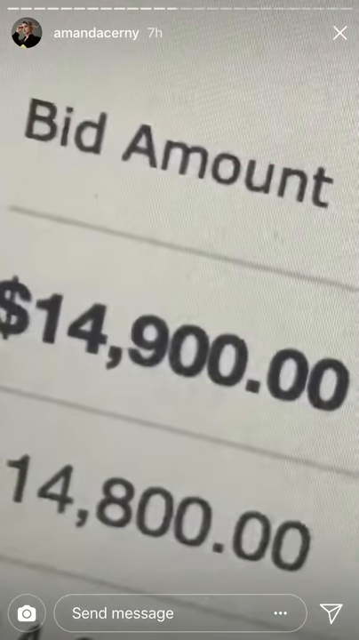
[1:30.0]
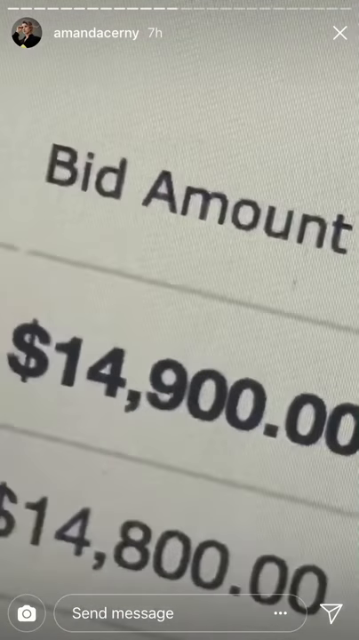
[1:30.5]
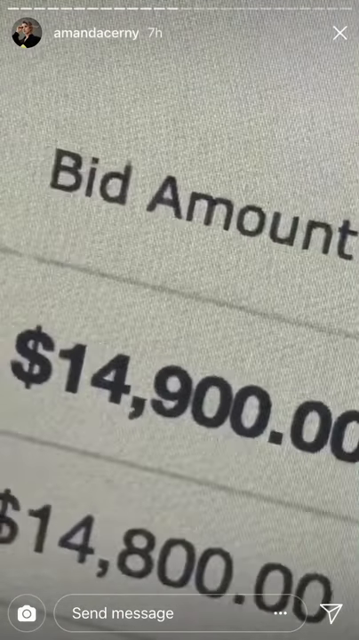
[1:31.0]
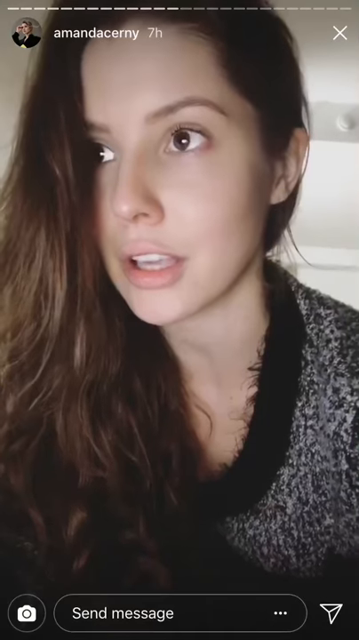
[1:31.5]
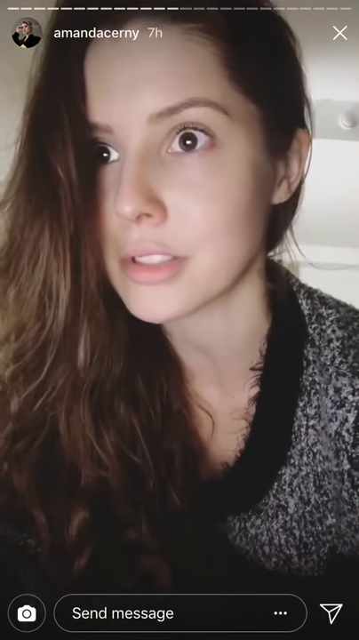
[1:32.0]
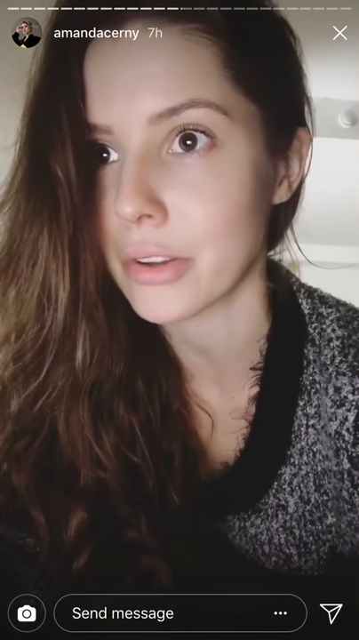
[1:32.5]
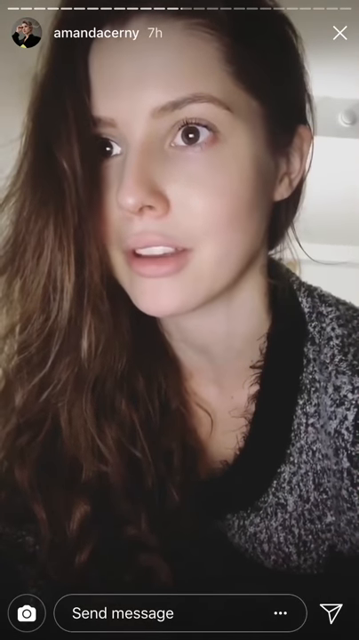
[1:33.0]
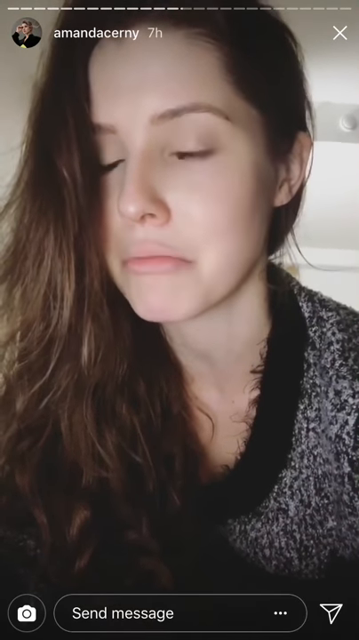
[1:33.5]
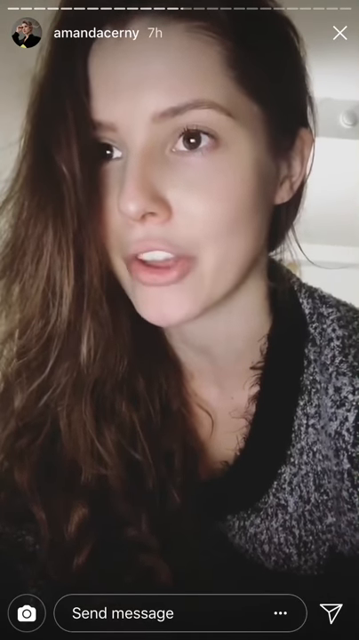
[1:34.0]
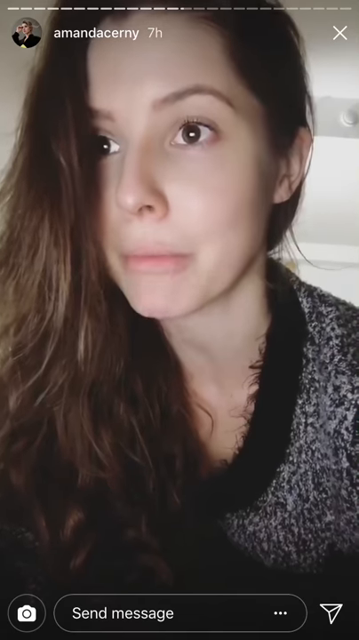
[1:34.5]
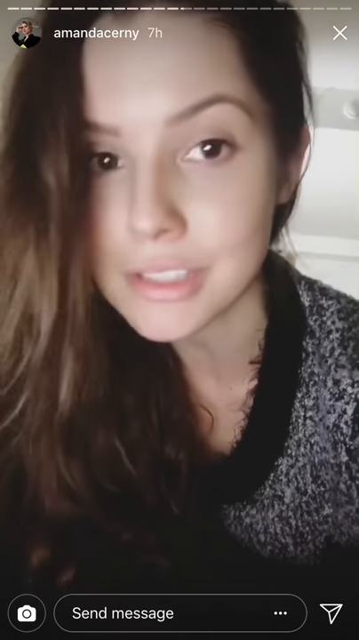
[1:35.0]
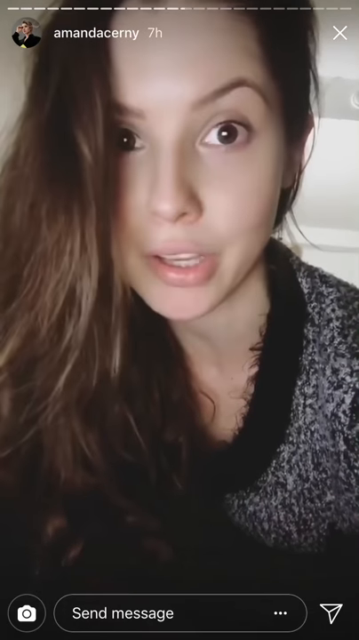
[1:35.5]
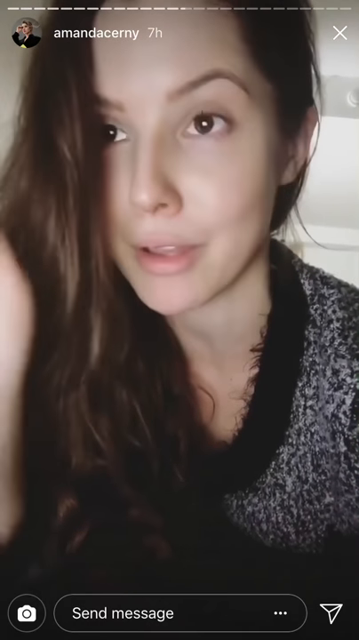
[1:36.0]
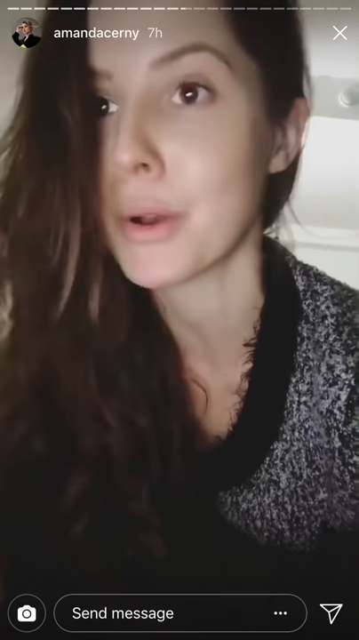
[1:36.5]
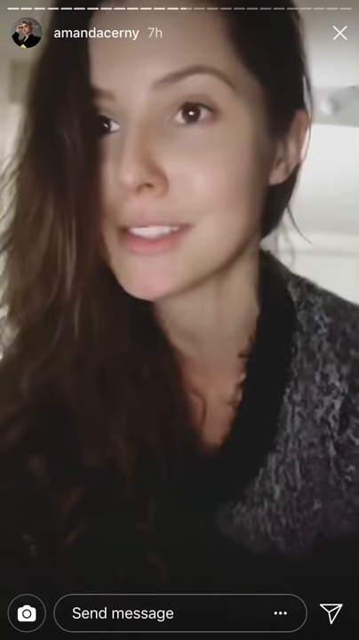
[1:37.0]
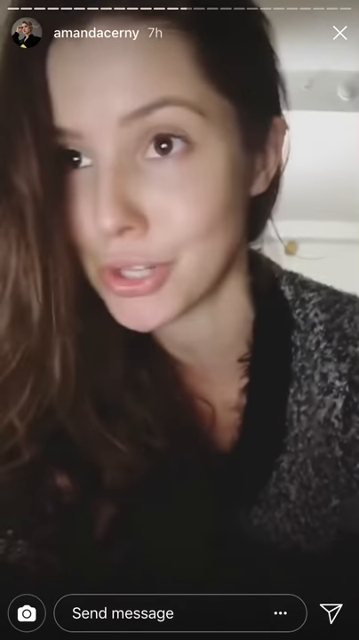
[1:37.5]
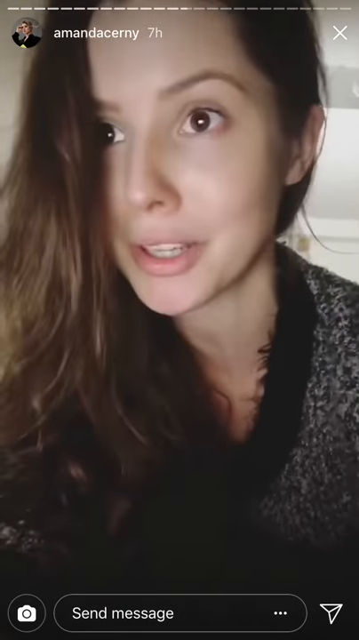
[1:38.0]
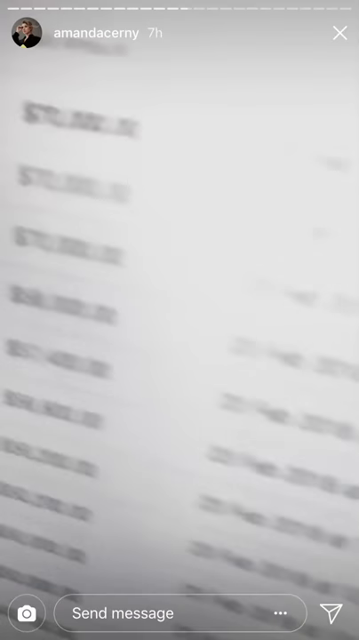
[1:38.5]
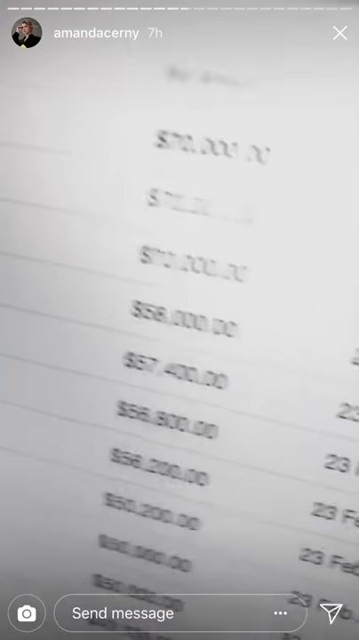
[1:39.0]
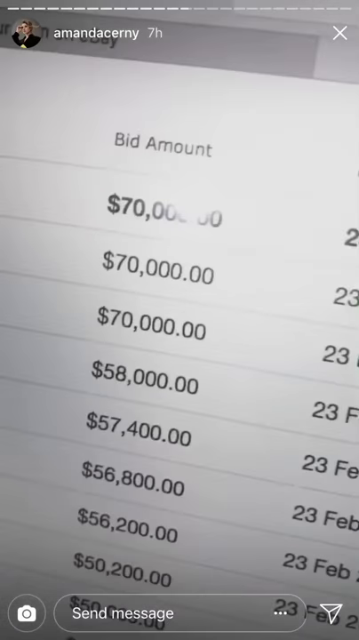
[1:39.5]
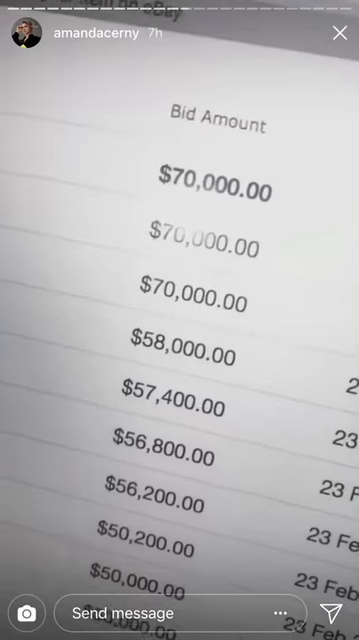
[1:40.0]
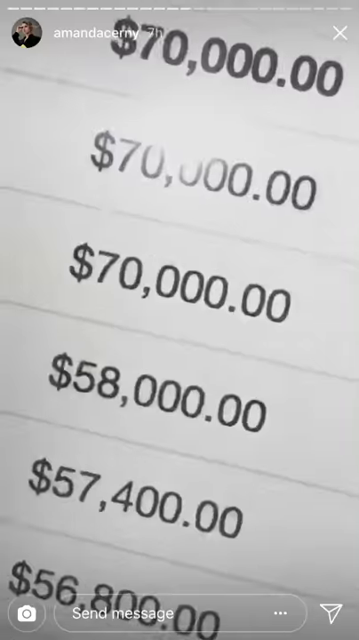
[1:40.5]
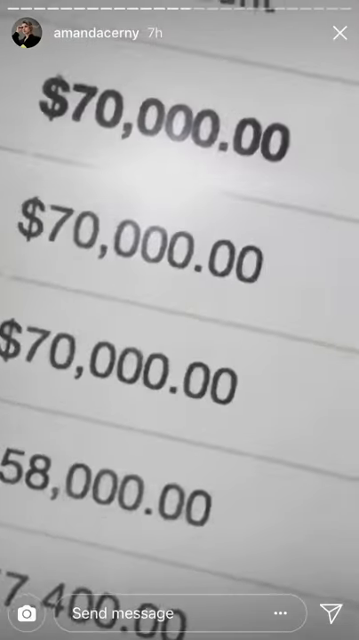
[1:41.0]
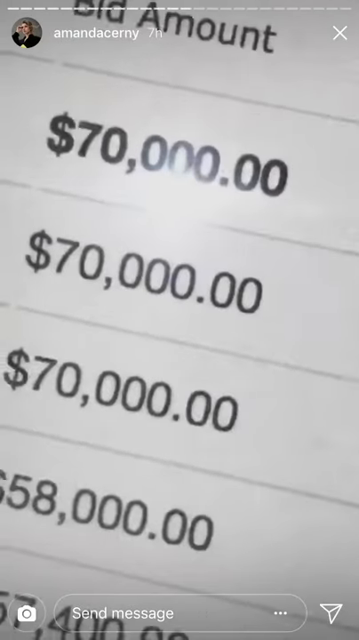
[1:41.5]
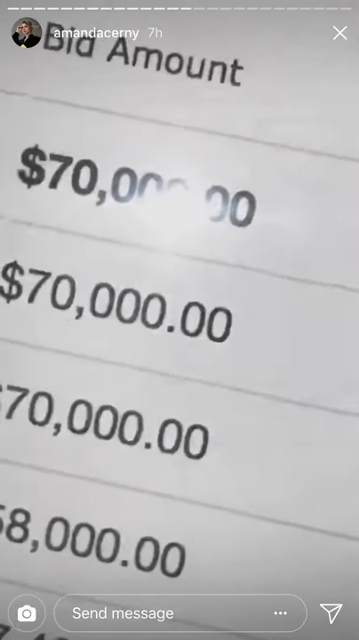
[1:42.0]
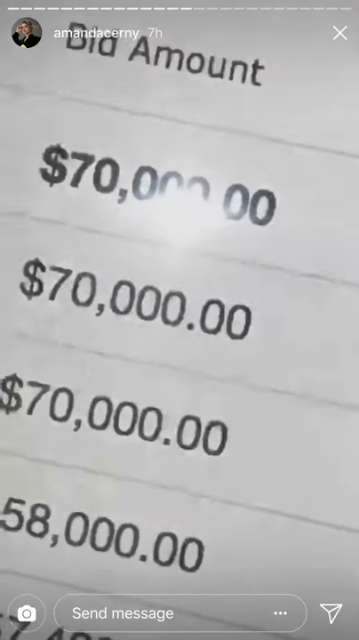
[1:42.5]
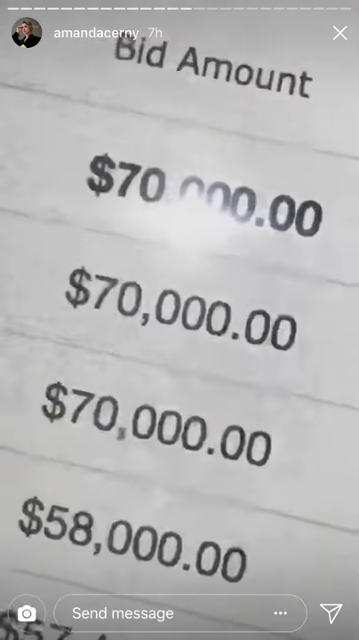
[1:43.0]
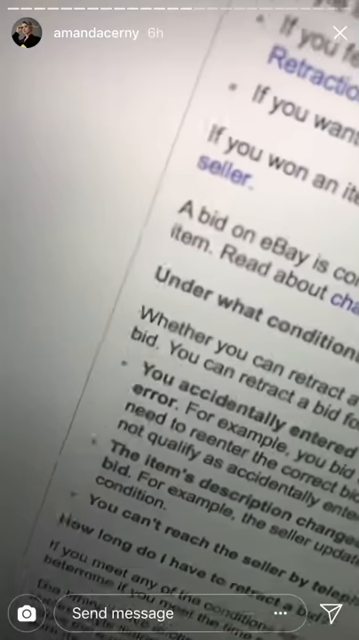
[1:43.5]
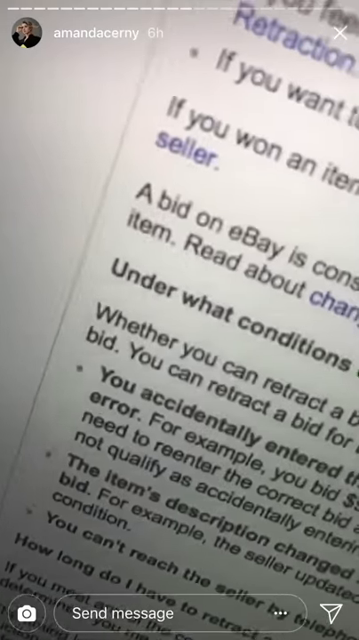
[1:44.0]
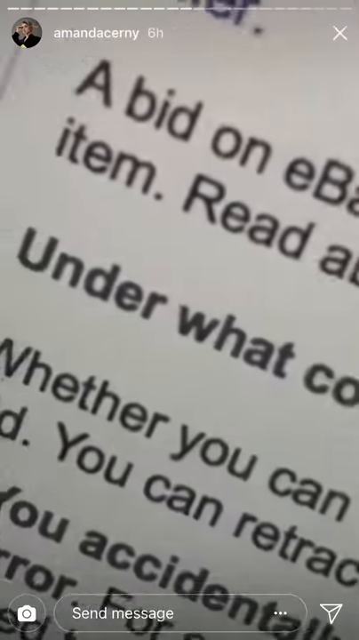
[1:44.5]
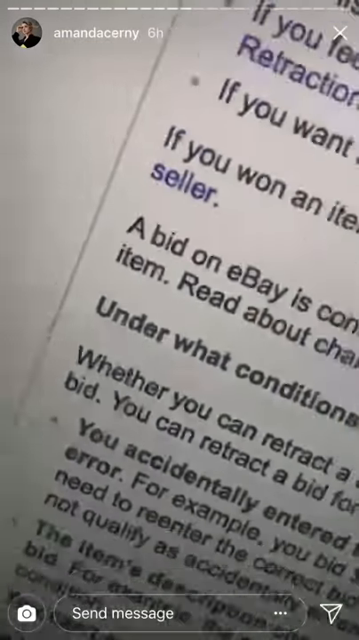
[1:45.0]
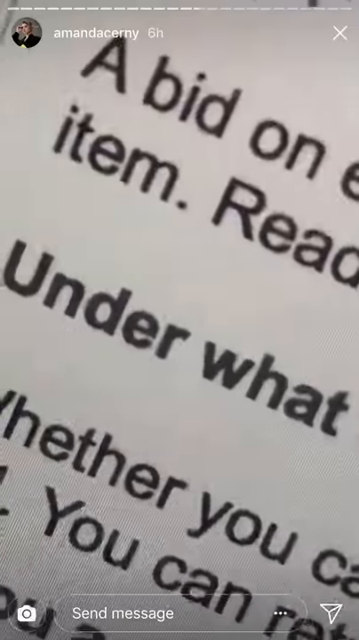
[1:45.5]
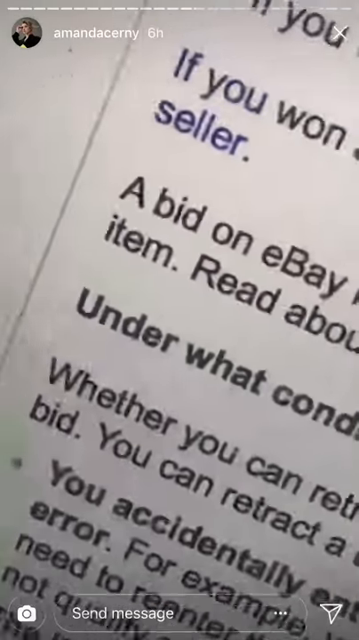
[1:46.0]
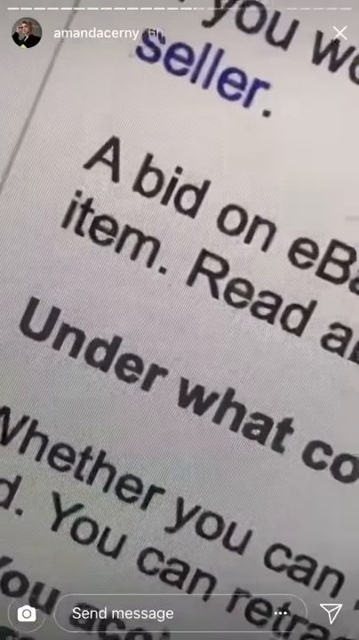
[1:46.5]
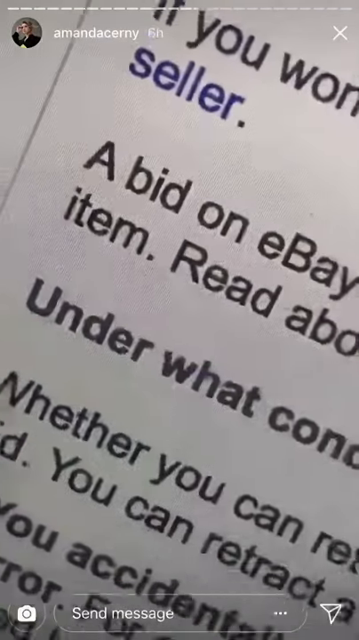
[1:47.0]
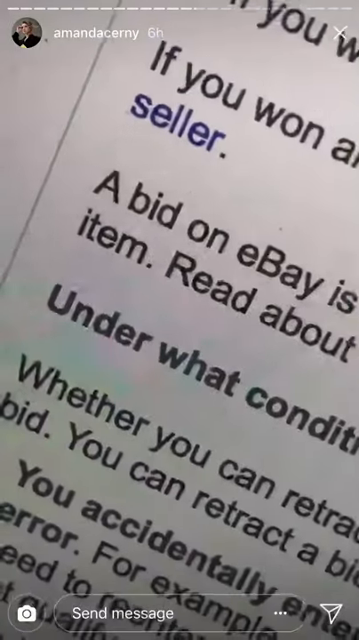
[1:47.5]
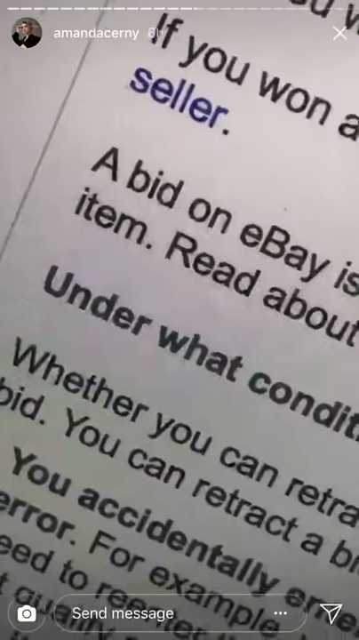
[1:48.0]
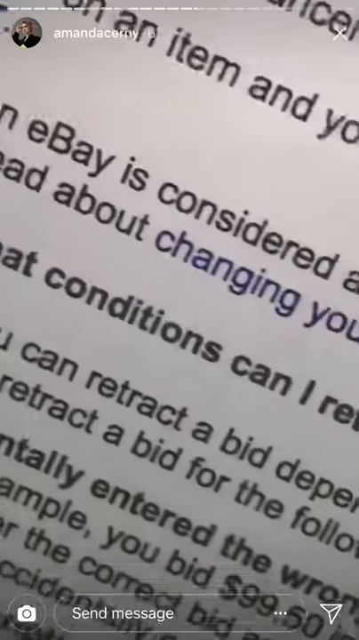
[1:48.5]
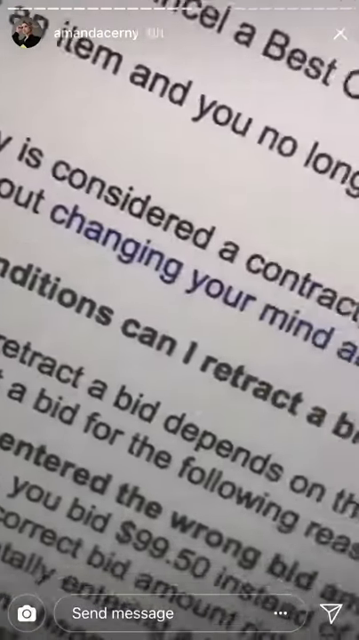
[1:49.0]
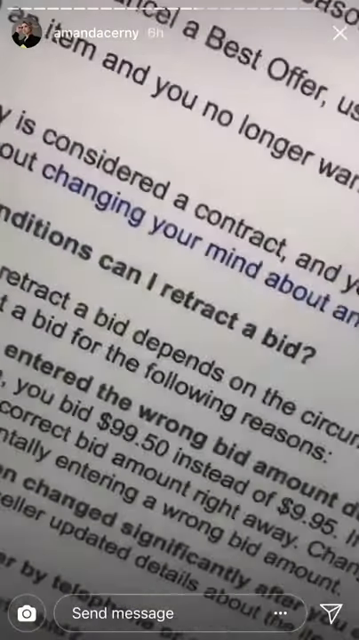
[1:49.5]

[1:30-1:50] A screen shows an Instagram story from the user amandacerny displaying an eBay bid amount of $14,900. The video then focuses on a woman with long brown hair who is peeking and looking directly at the camera; she wears a black and grey jersey. The camera then shows a bid amount of $70,000 as the highest bid so far. Next come terms and conditions on the eBay website, focusing on the text "a bid on eBay". The camera zooms in and out.